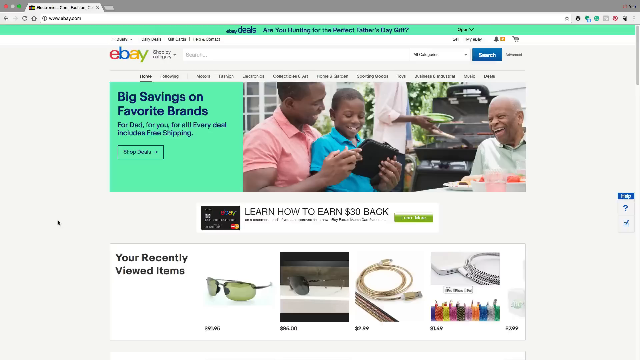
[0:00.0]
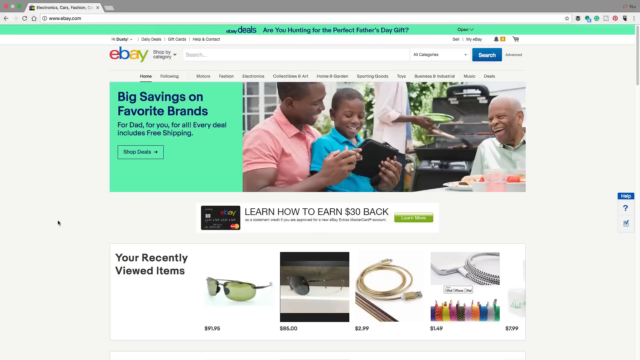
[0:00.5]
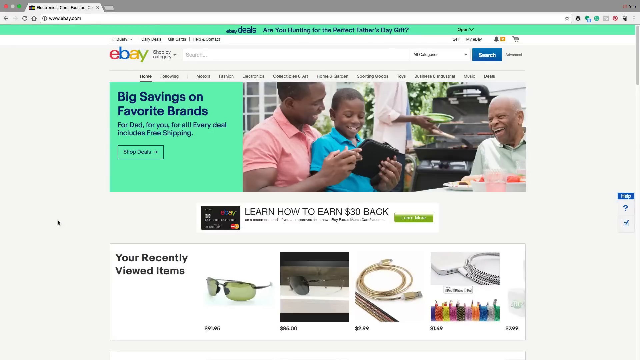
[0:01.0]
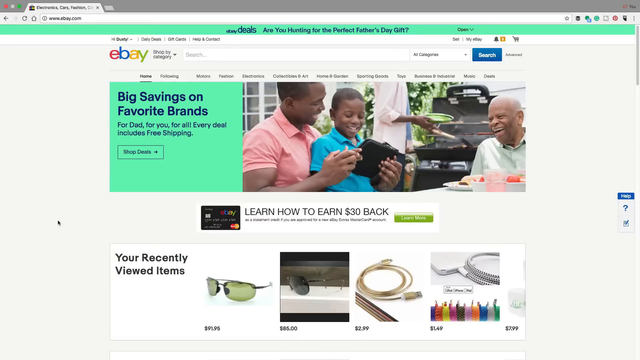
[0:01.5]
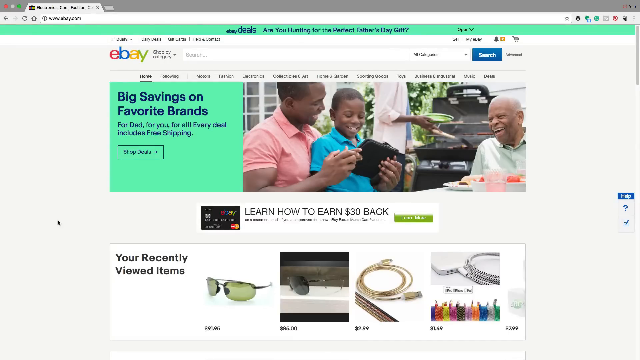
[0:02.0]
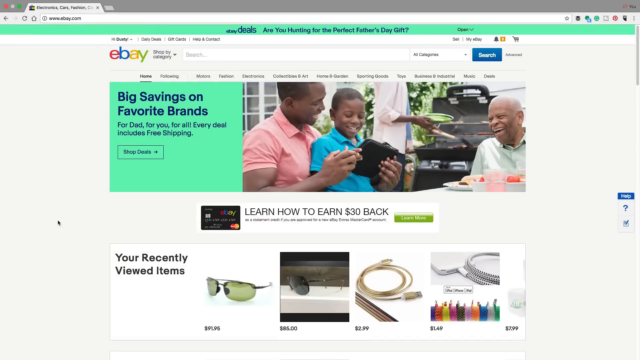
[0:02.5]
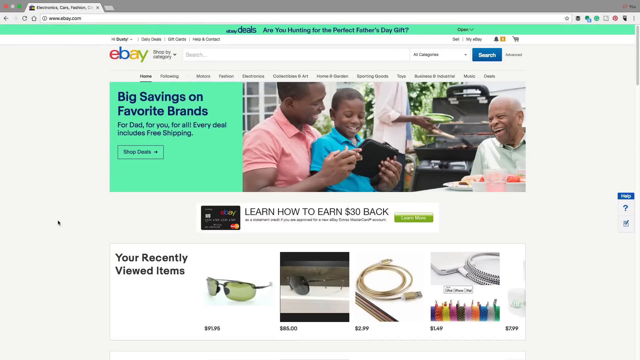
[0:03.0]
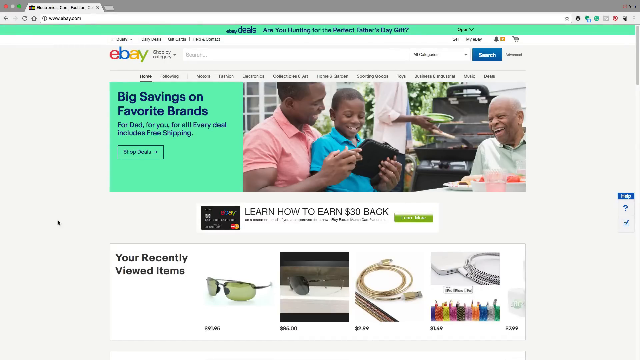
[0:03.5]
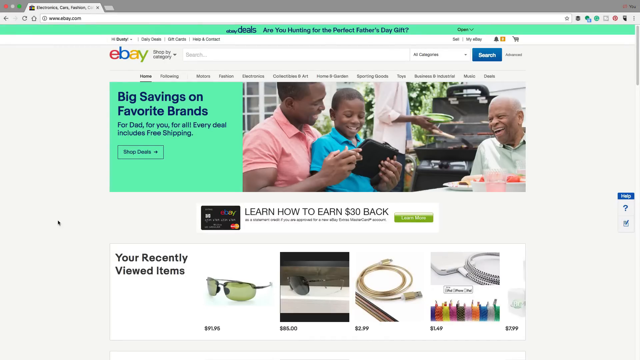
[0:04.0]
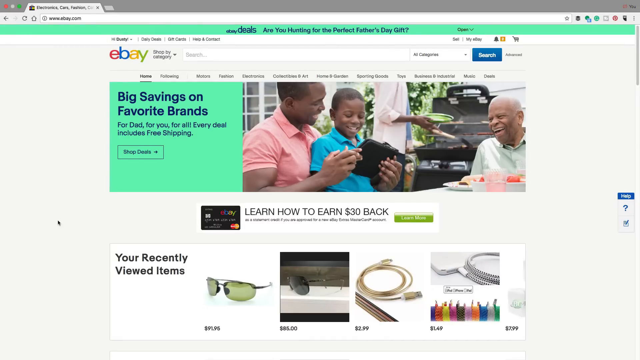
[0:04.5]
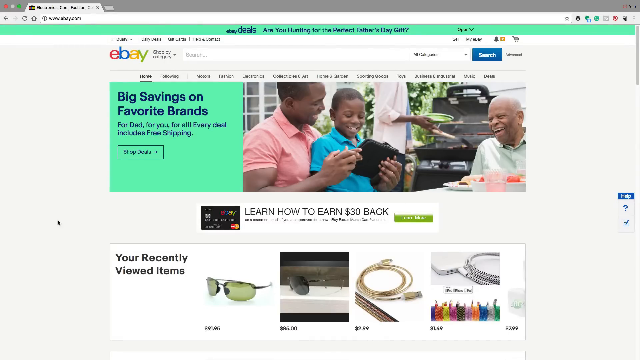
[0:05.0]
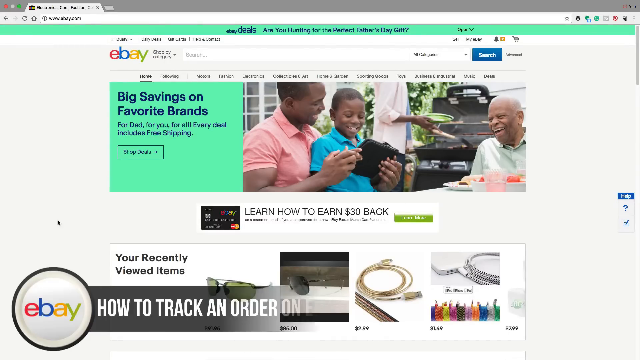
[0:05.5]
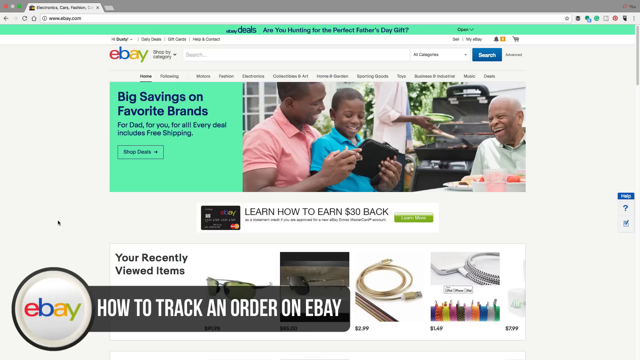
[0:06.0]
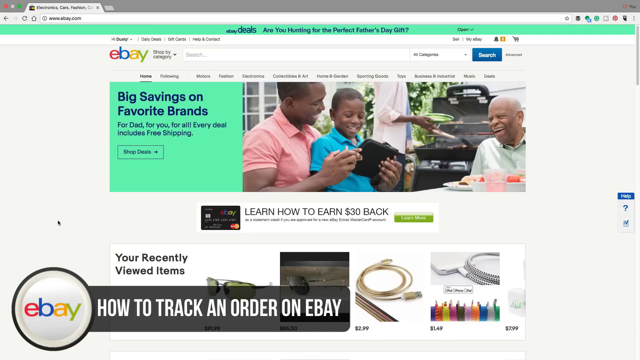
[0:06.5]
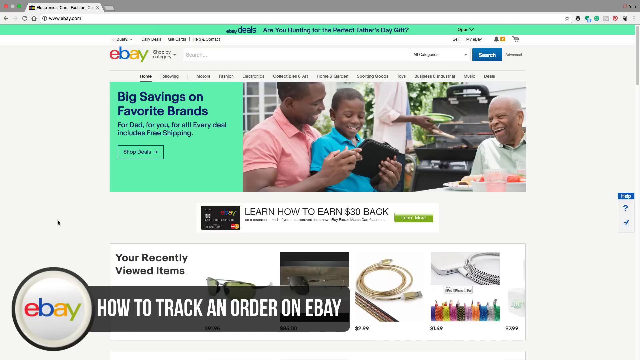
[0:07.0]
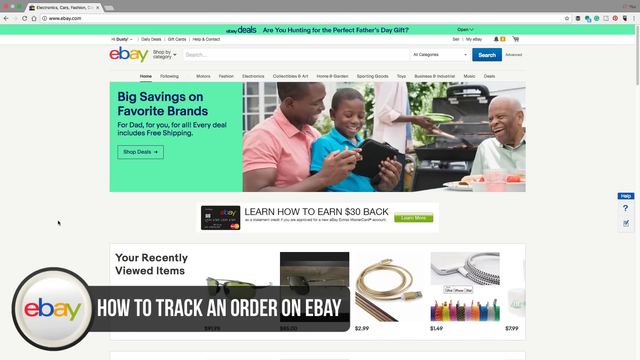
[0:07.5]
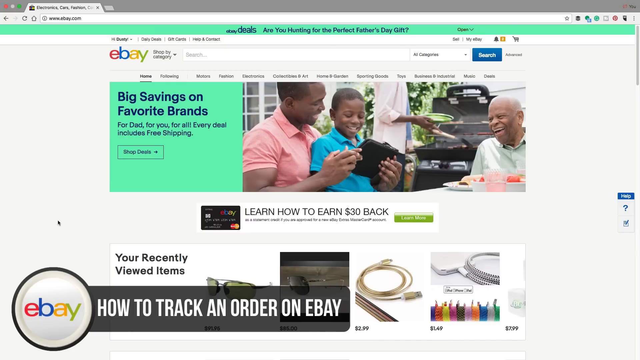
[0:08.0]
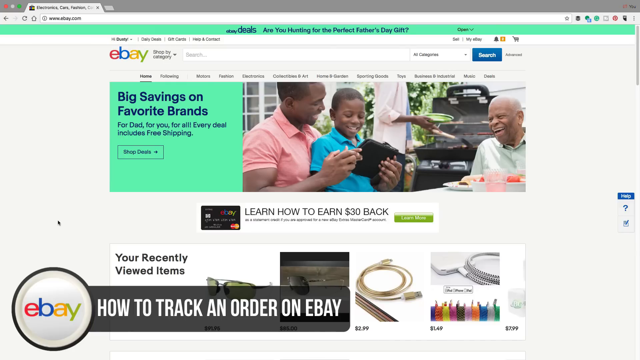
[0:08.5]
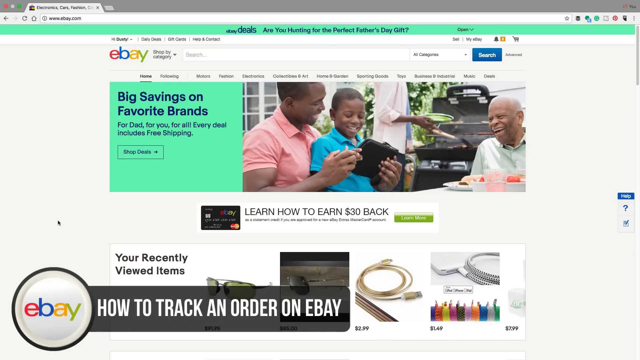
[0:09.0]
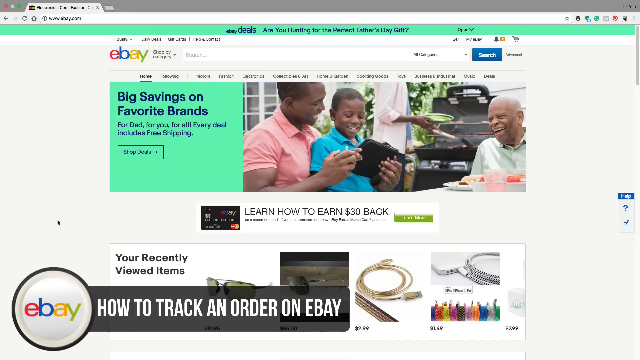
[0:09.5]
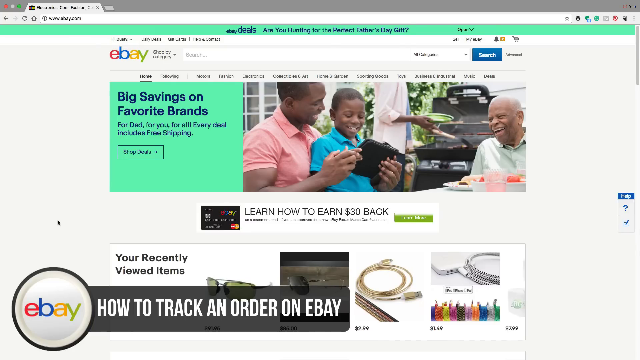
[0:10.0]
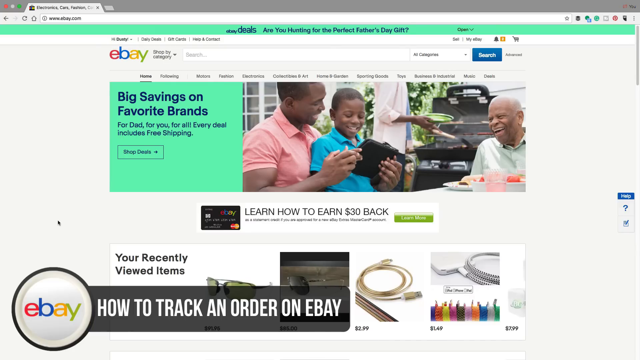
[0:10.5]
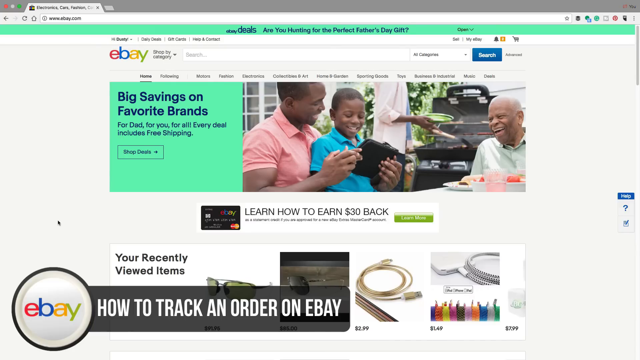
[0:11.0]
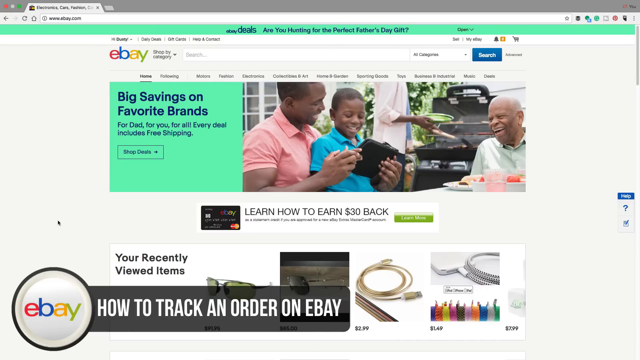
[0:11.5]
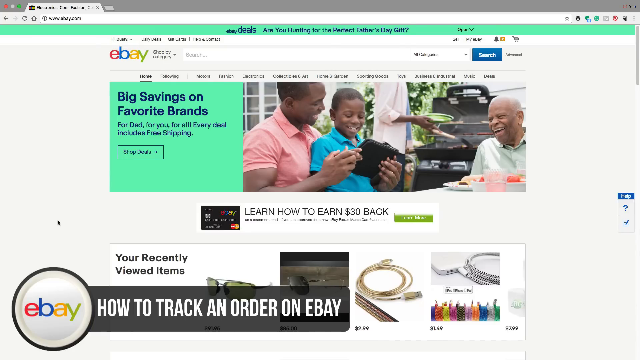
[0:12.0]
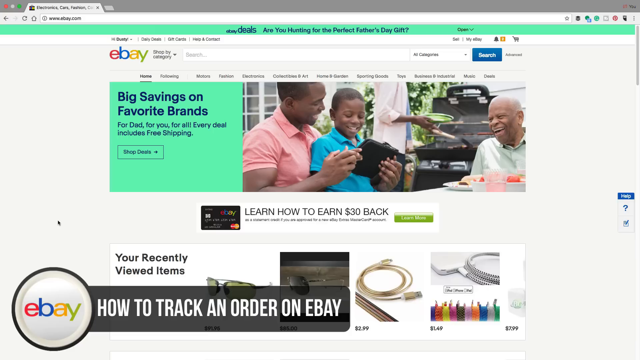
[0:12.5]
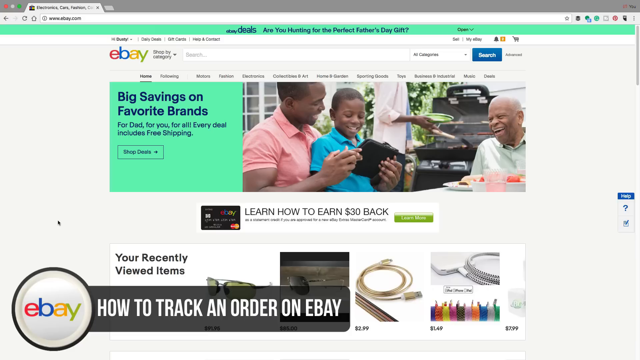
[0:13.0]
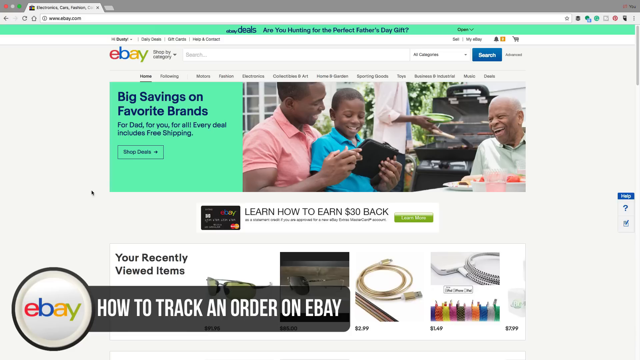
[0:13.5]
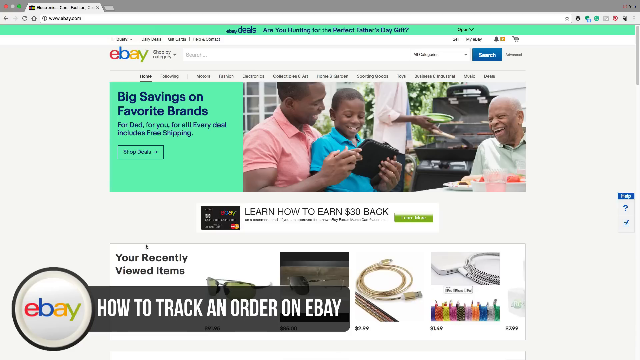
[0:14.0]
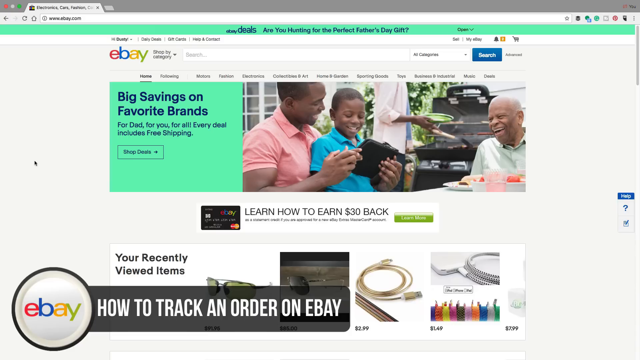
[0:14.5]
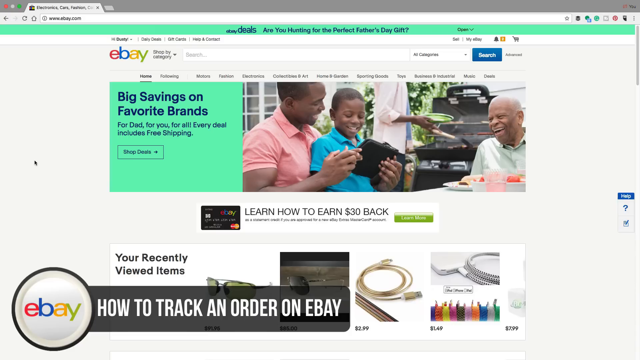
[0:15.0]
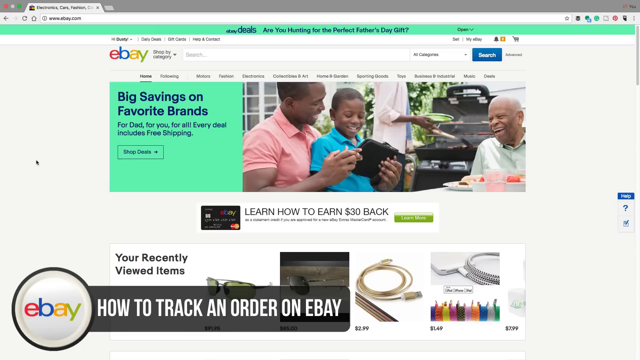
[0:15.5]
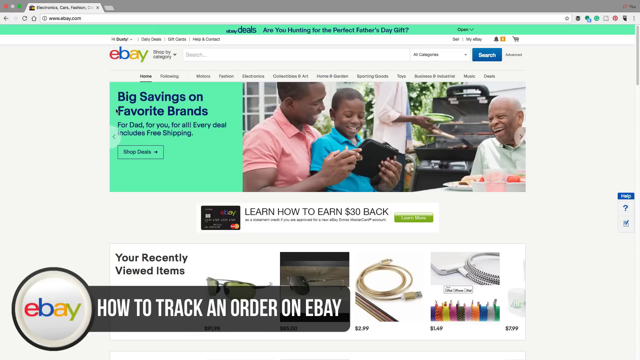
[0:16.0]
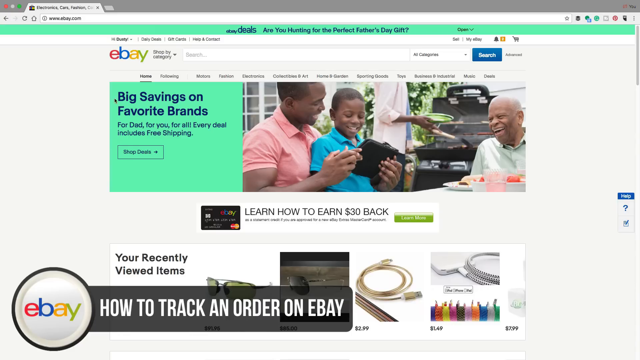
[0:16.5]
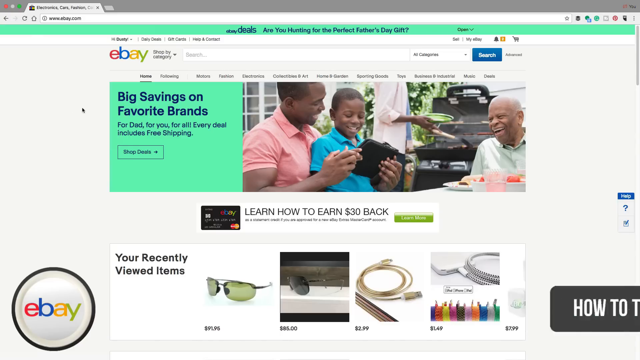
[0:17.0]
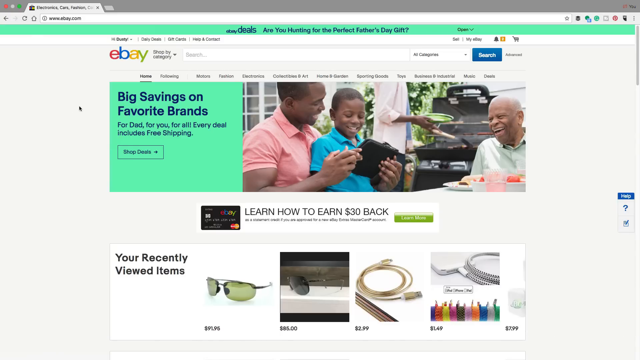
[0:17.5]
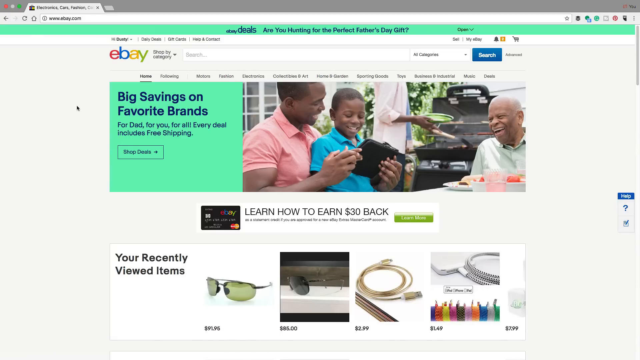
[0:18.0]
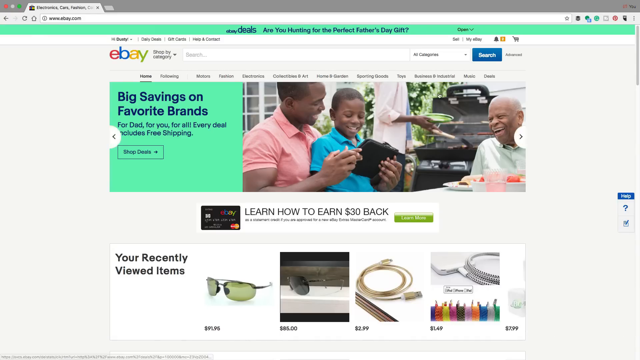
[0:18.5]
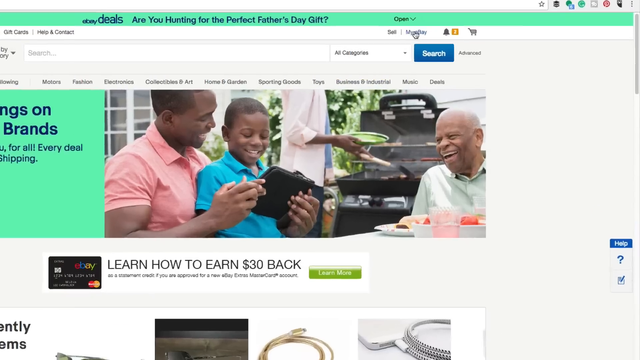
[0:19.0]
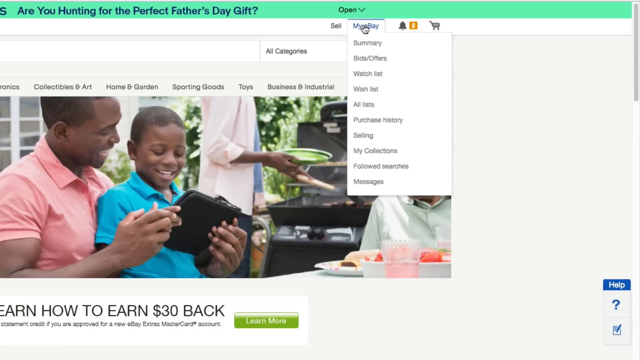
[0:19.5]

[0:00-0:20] The video opens on the eBay homepage, recognizable by the site layout, the eBay logo, and "www.ebay.com" in the top left portion where the navigation is. A title appears at the bottom reading "how to track an order on eBay" in white lettering on a black horizontal rectangular box, with the eBay logo to its left inside a black circle with a kind of white inside. The video stays on the front screen; near the end, the person moves the mouse around on the left side of the screen, the eBay logo disappears, and the text kind of goes off to the right. The view appears to zoom in on a portion at the top that says "My eBay", which the person clicks, opening a drop-down menu with buttons including Summary, Bids/Offers, Watchlist, Wishlist, All Lists, Purchase History, Selling, My Collections, Followed, Searches and Messages.